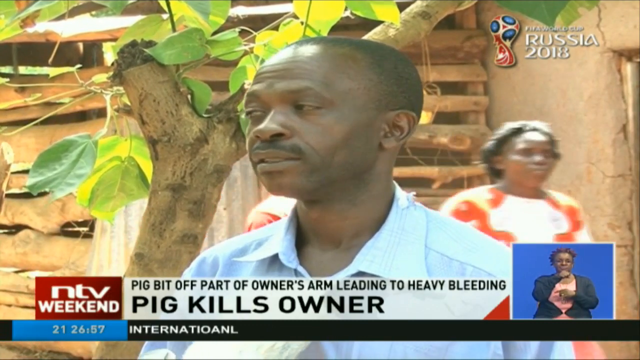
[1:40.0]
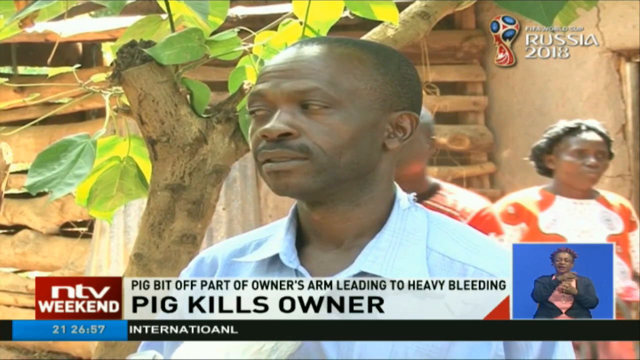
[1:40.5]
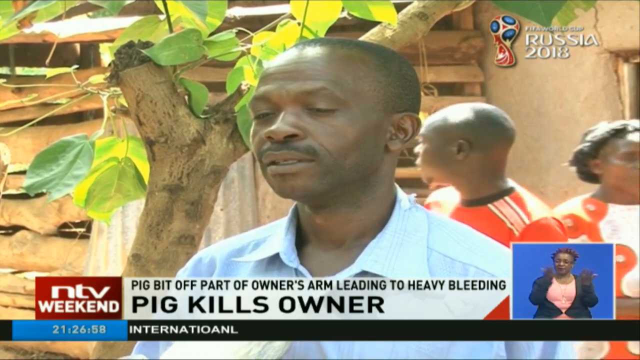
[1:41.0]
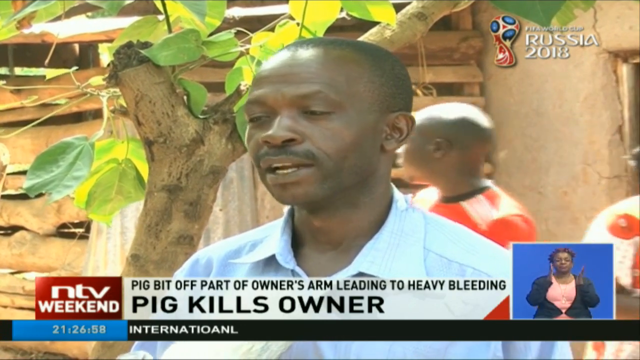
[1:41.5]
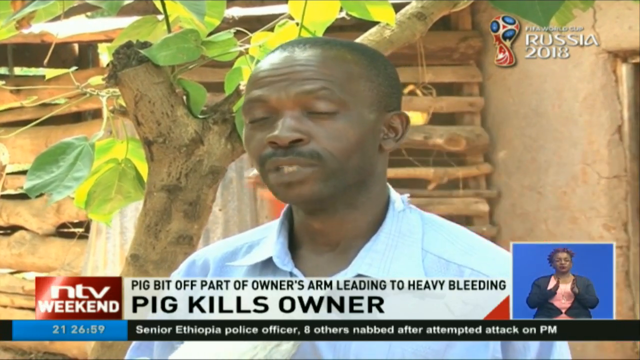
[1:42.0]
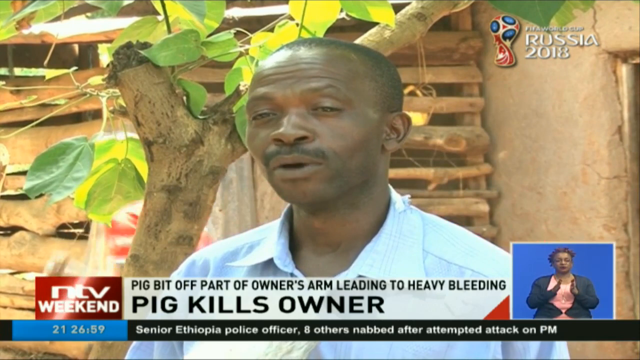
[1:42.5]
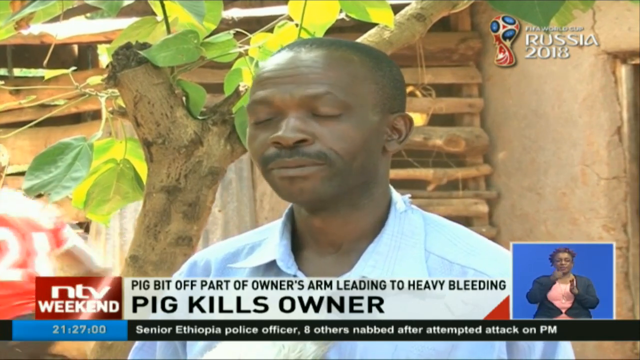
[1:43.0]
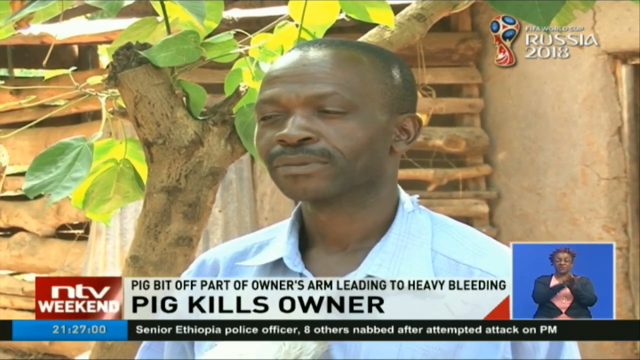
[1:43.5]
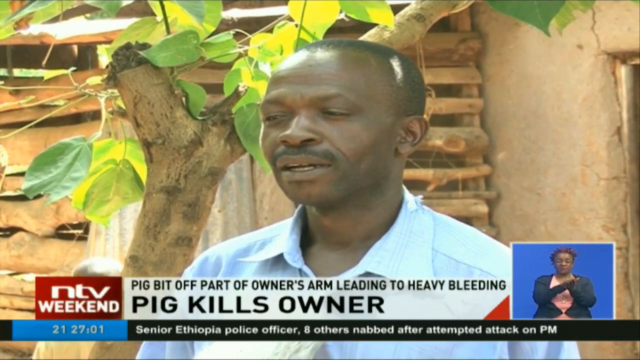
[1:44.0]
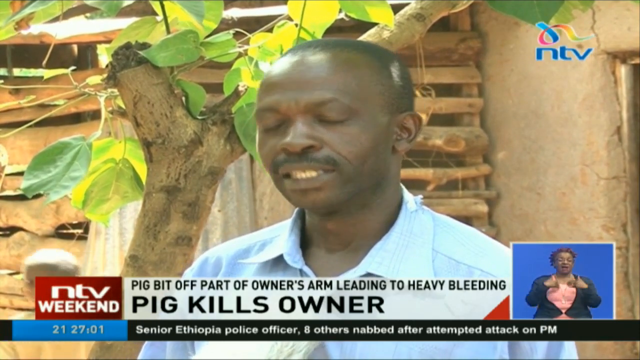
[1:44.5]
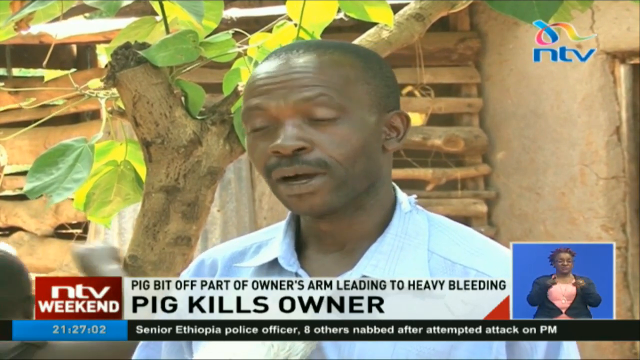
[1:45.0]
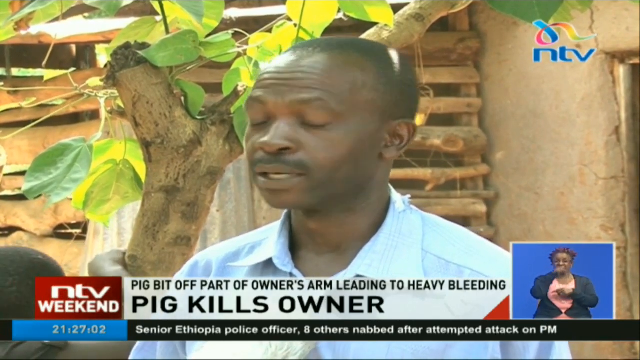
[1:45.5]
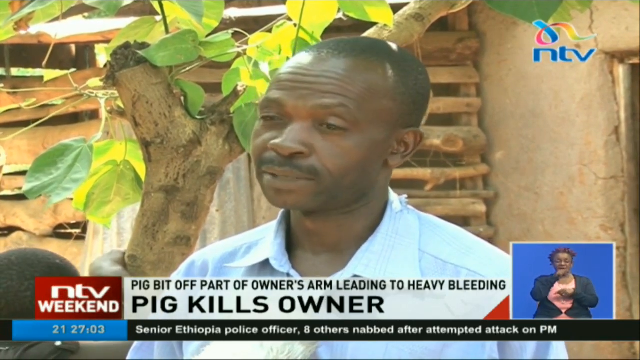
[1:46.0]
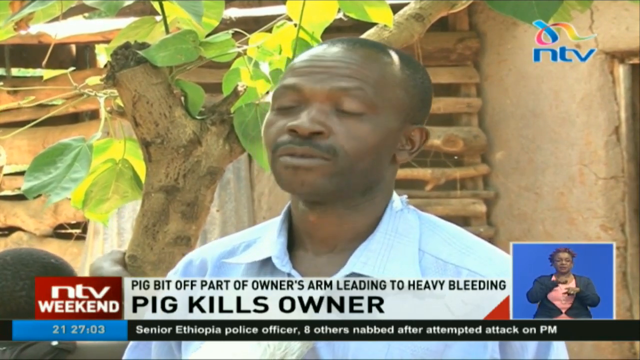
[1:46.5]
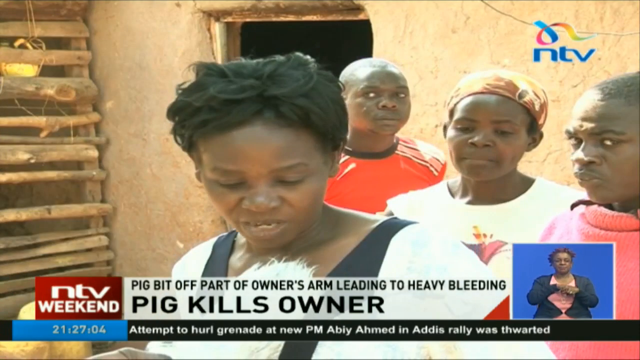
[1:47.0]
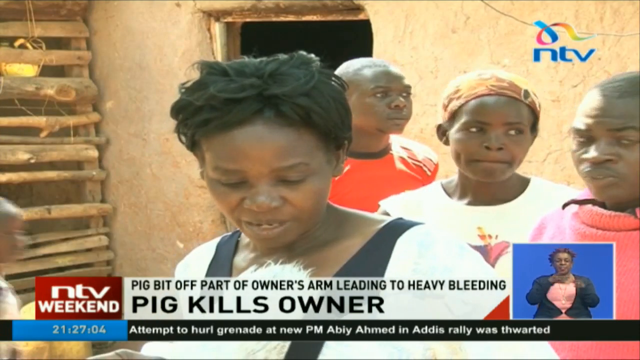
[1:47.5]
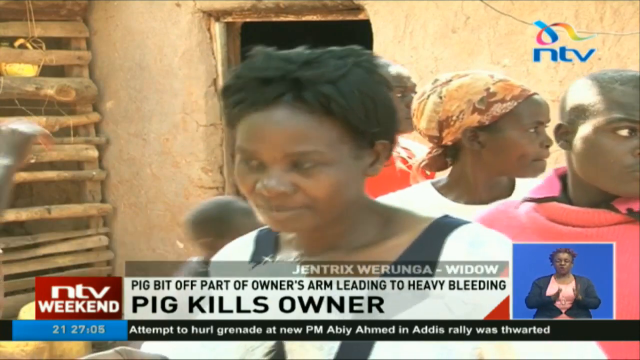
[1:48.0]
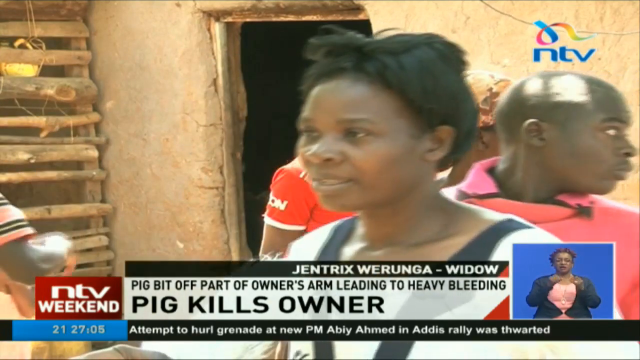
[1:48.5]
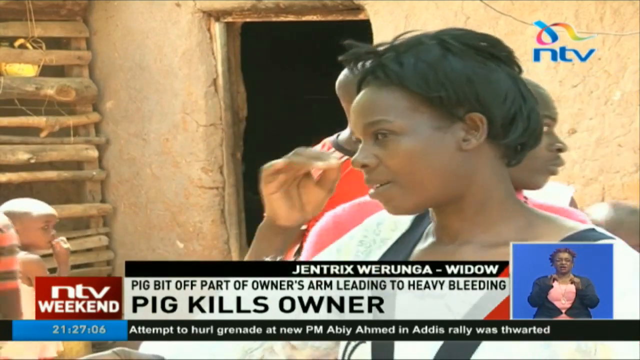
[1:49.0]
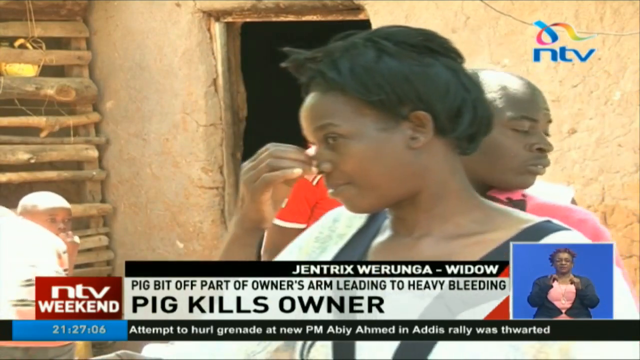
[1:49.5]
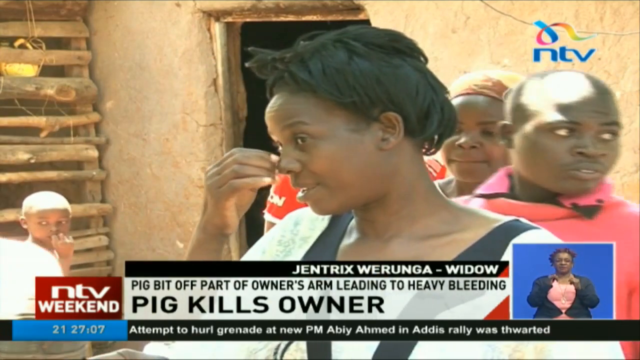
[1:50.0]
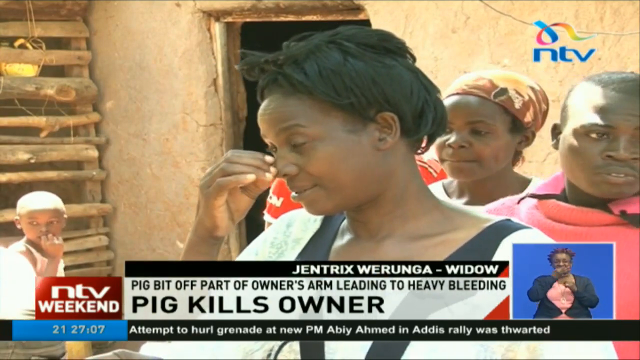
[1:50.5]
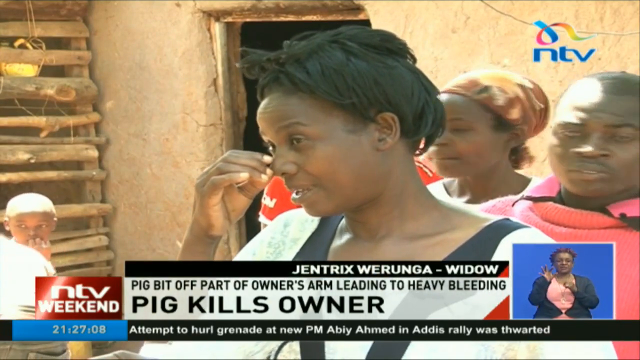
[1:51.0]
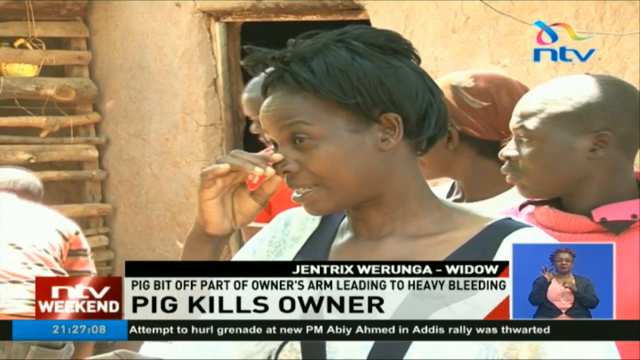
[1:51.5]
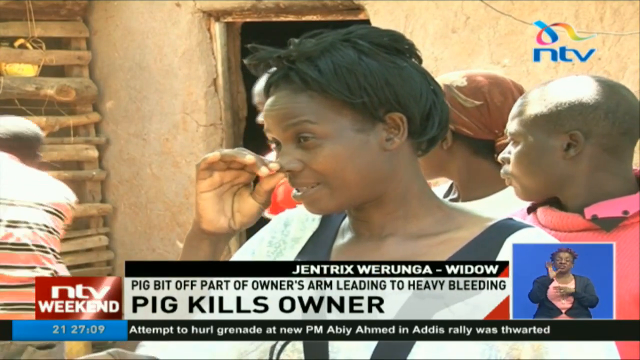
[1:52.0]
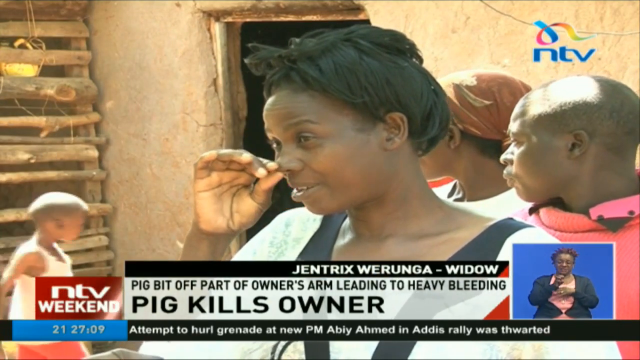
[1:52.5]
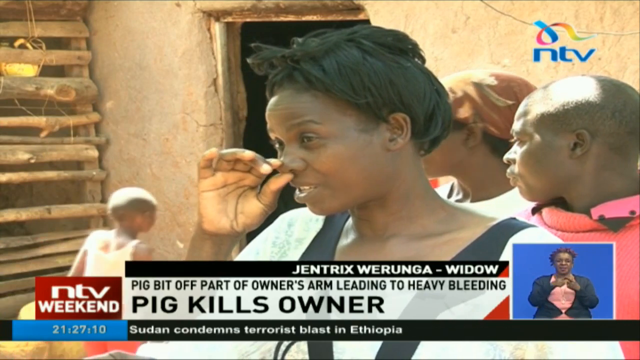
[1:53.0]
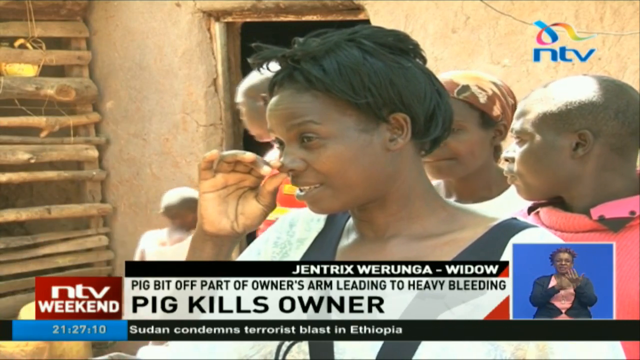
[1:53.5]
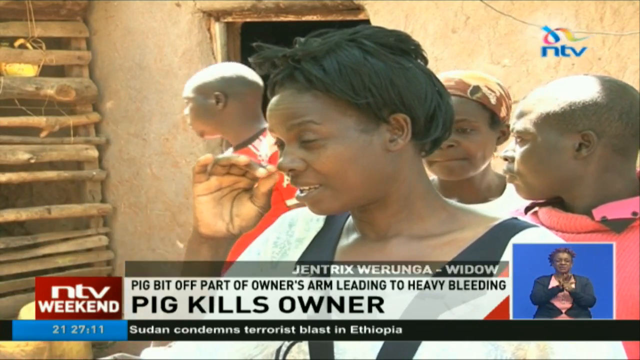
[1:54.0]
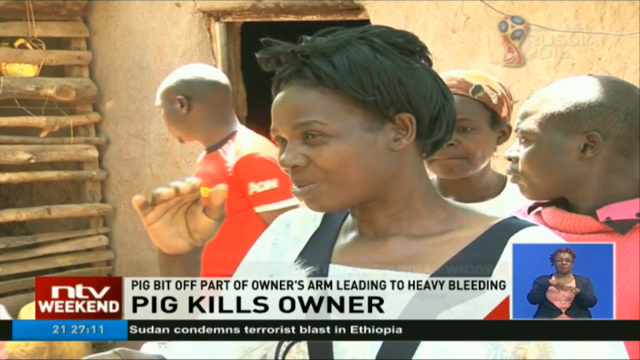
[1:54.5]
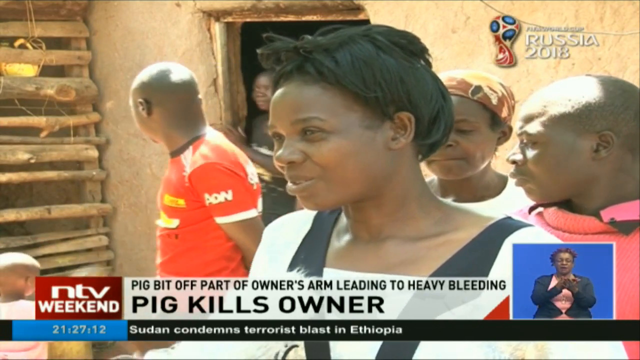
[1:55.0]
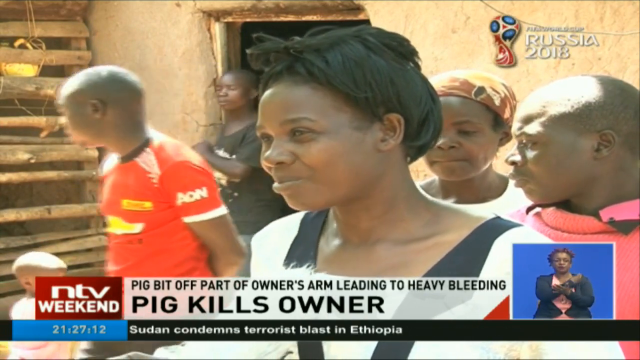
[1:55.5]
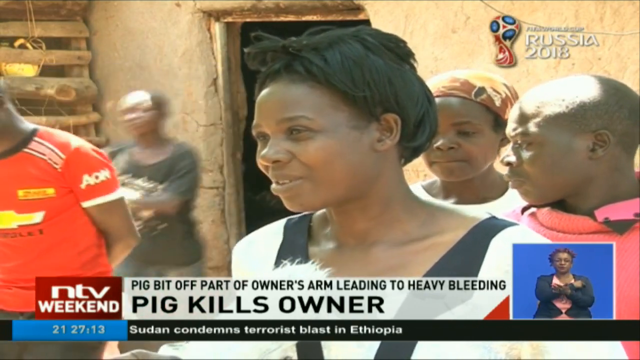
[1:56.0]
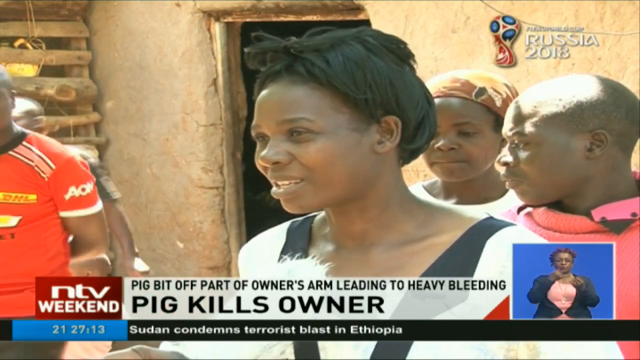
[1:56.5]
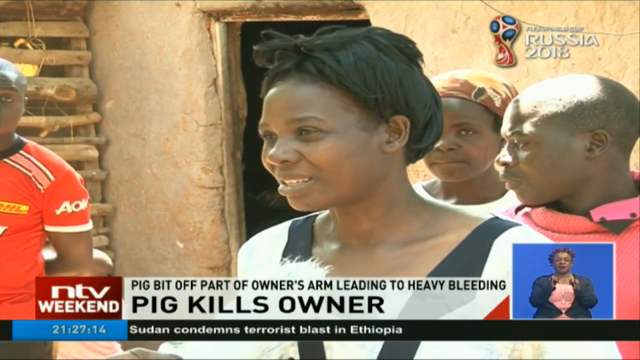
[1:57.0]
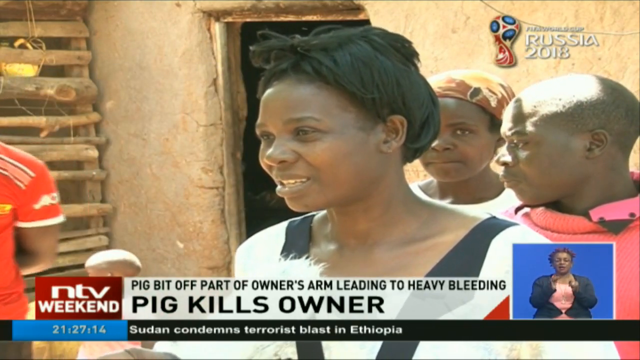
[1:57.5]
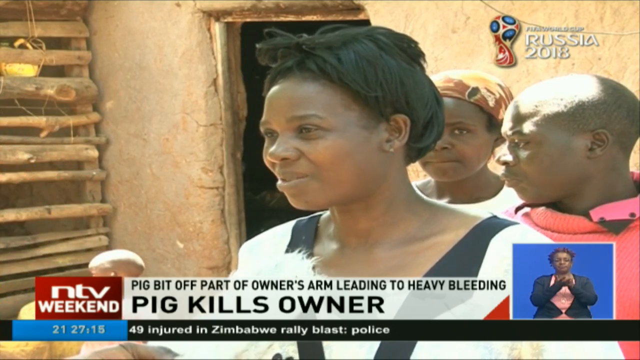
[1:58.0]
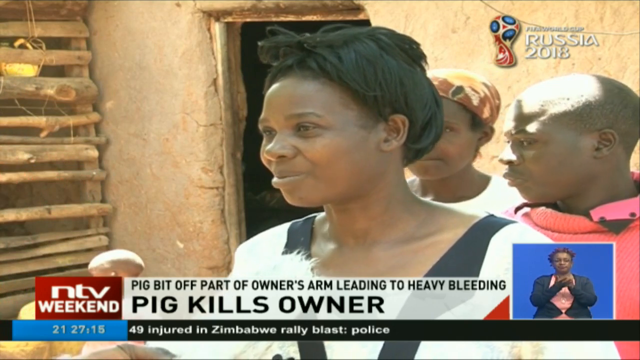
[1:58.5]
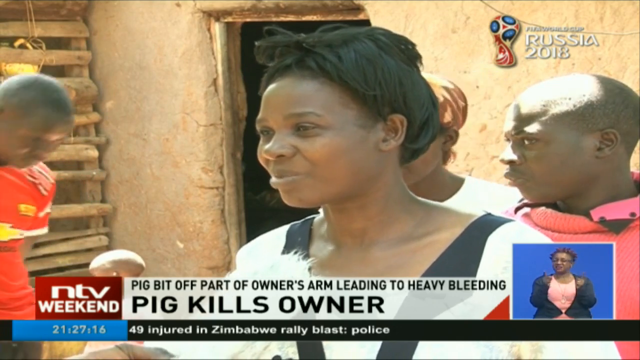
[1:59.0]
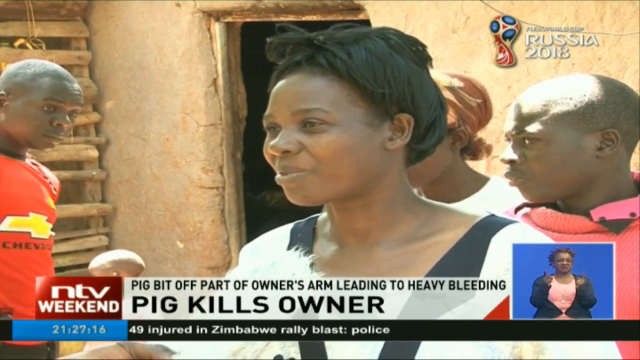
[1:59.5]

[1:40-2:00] Mr. Isaiah Barasa, the neighbour of Mr. Werunga, who was killed by his own pigs, is being interviewed. He is a handsome black man with short hair and a moustache and seems to be 50 to 60 years of age. After his interview, a lady appears who is introduced as Mr. Werunga's widow, Jentrix Werunga. She is a beautiful, chubby black woman with short hair, wearing a top or dress in black, white and red. Behind her are people, including a male wearing a red jersey or a red hoodie and a woman wearing a brown headscarf. There seem to be people around who are supporting her.